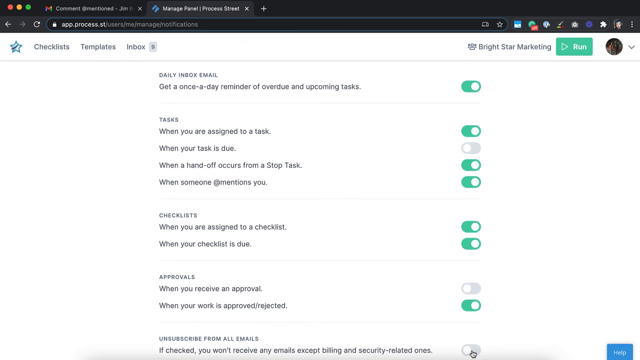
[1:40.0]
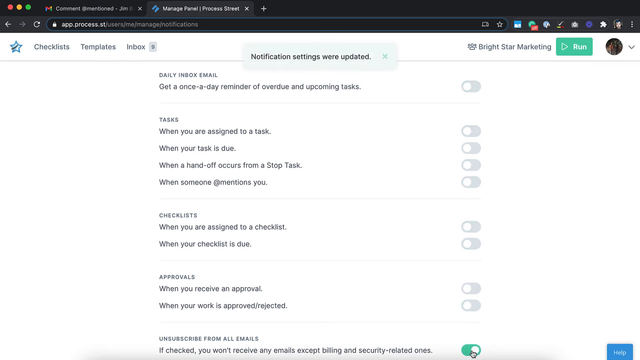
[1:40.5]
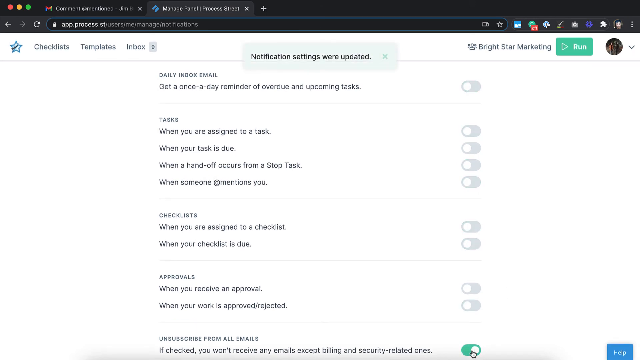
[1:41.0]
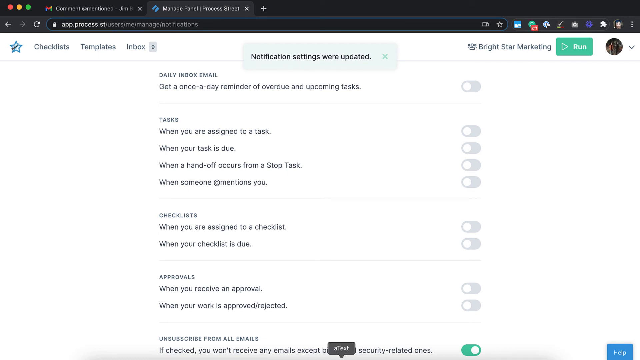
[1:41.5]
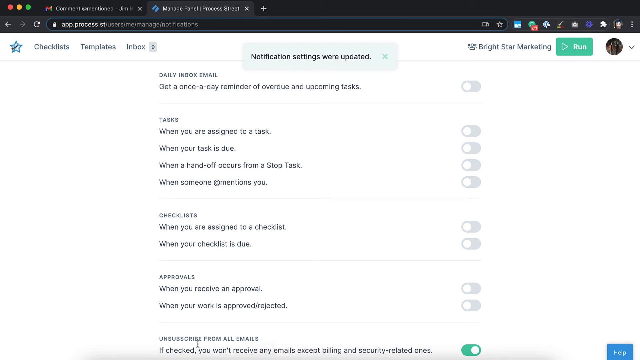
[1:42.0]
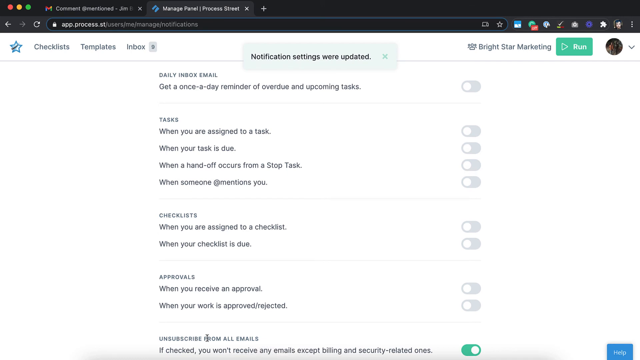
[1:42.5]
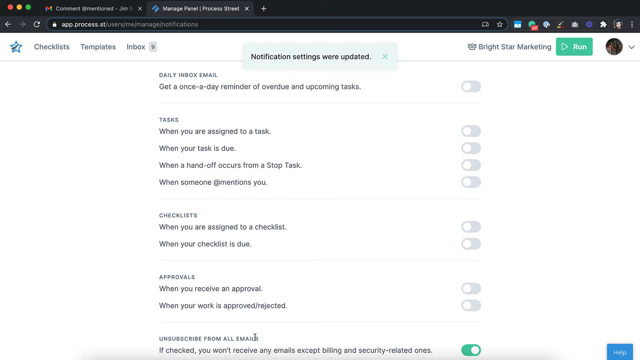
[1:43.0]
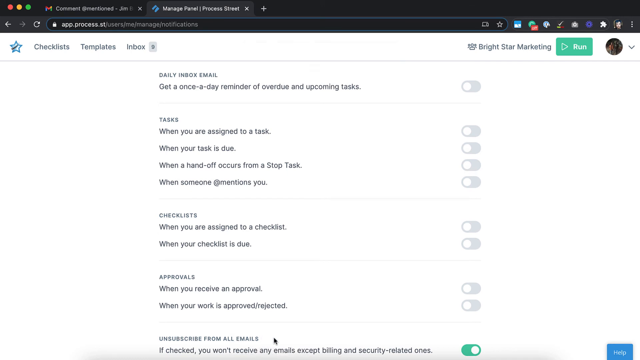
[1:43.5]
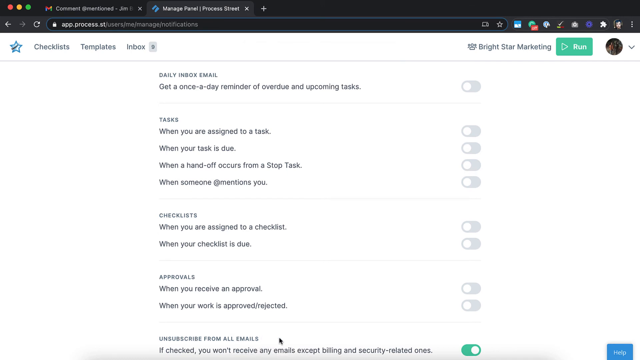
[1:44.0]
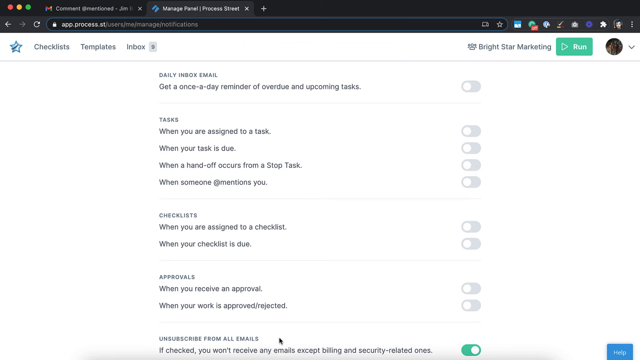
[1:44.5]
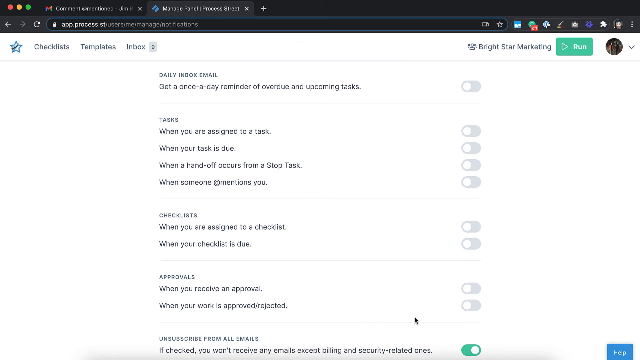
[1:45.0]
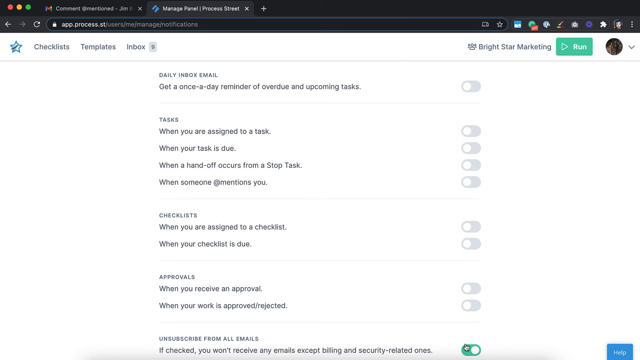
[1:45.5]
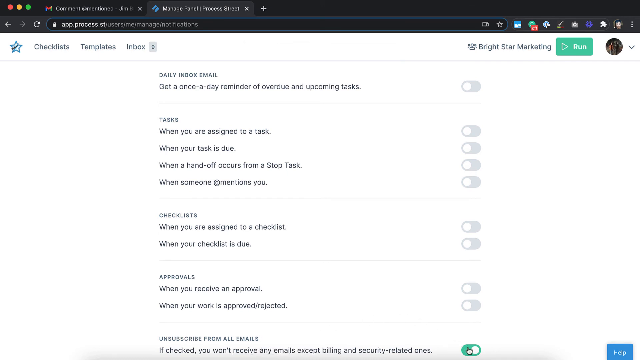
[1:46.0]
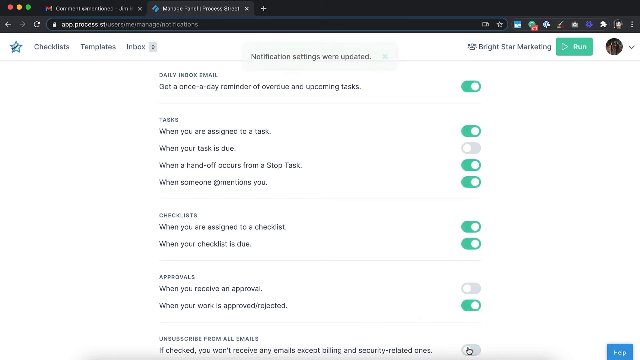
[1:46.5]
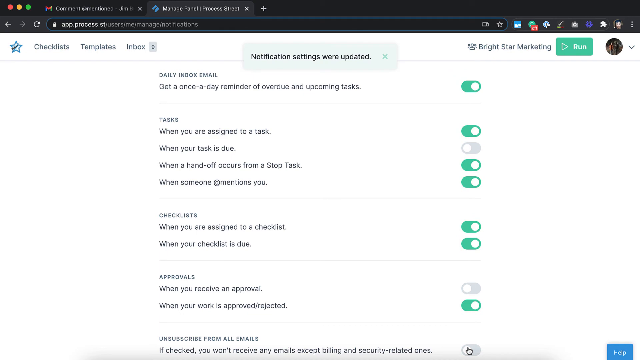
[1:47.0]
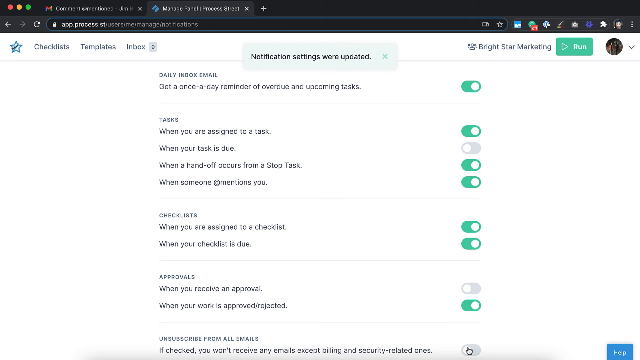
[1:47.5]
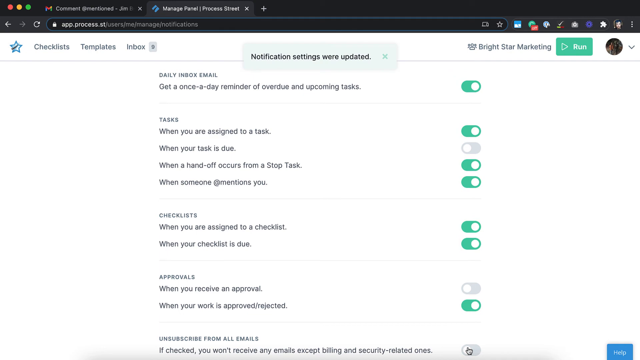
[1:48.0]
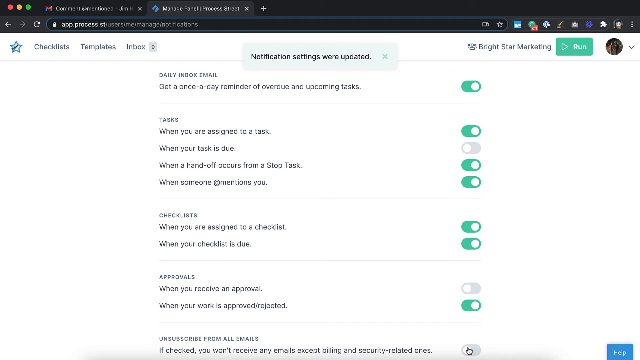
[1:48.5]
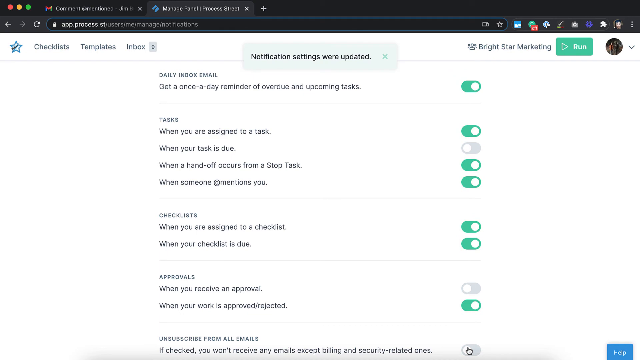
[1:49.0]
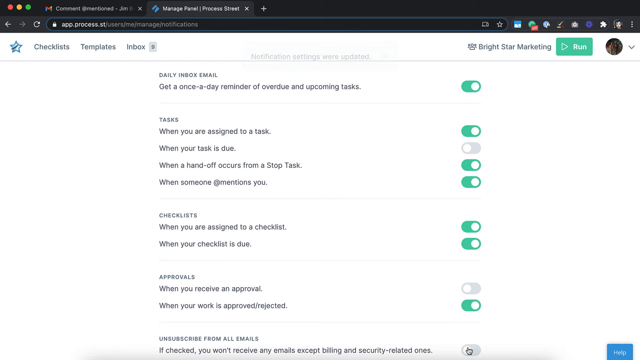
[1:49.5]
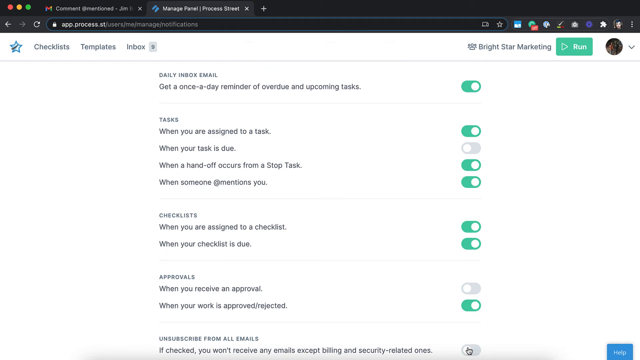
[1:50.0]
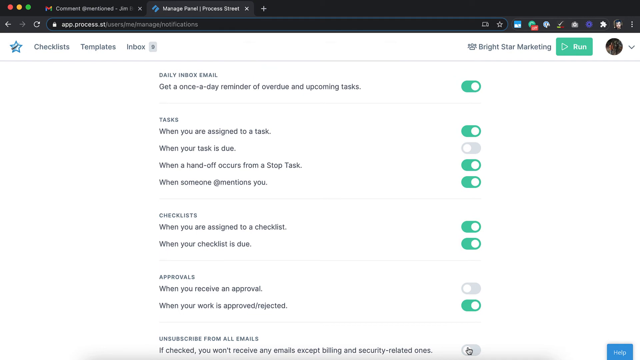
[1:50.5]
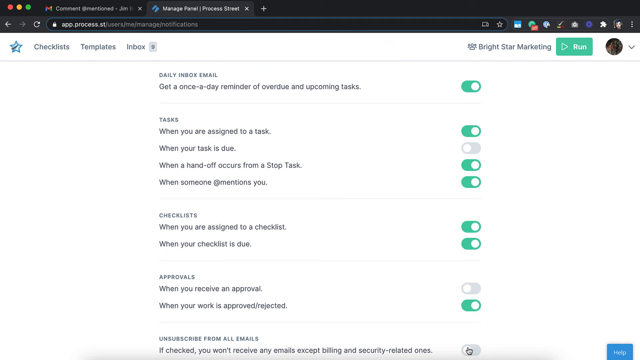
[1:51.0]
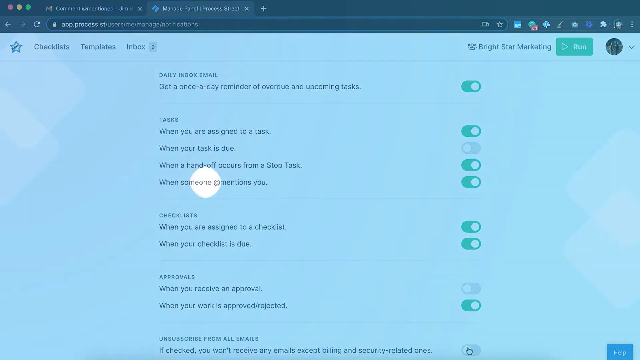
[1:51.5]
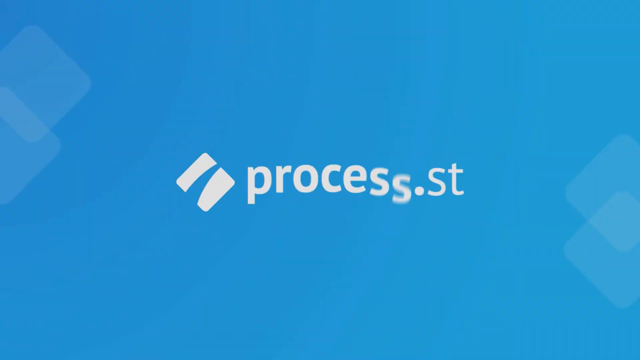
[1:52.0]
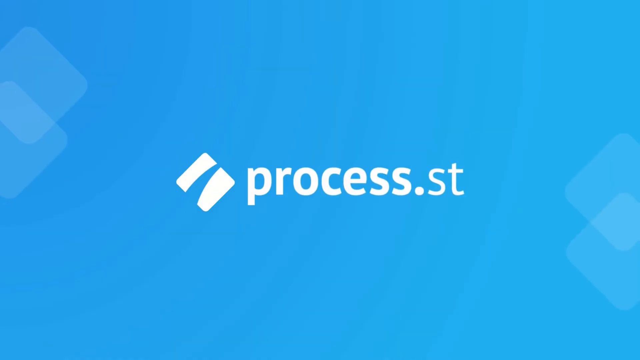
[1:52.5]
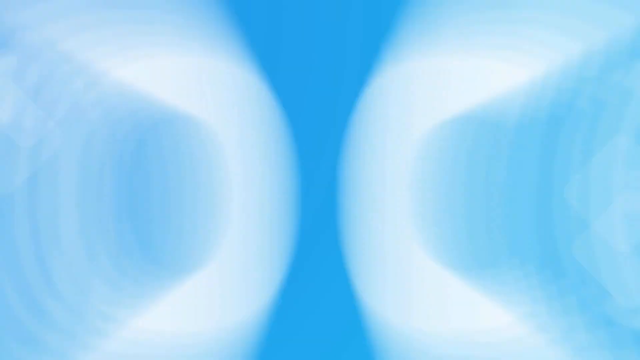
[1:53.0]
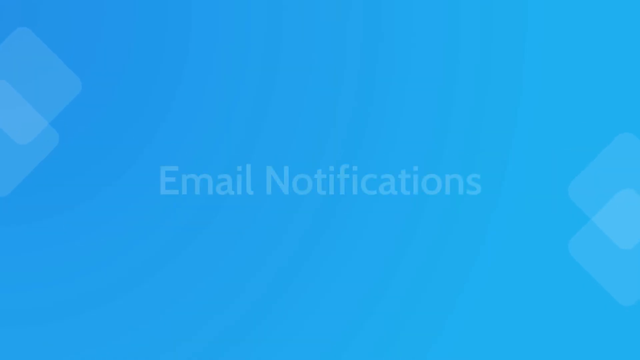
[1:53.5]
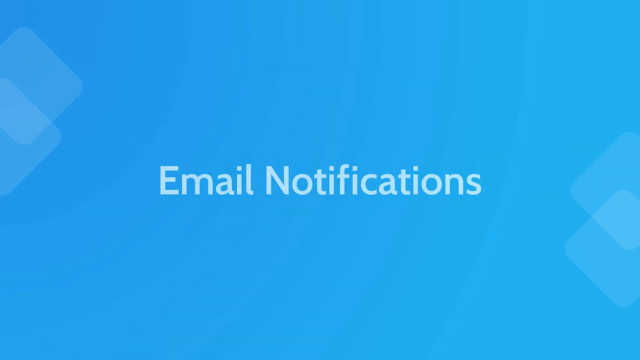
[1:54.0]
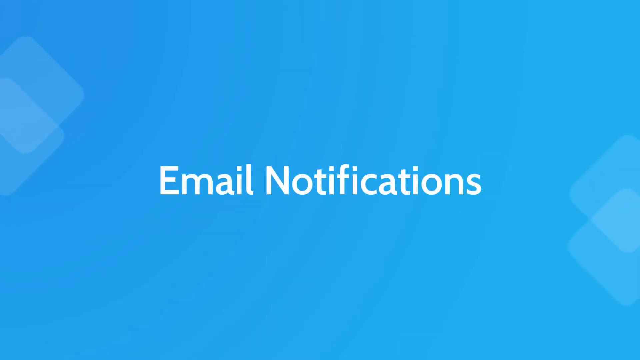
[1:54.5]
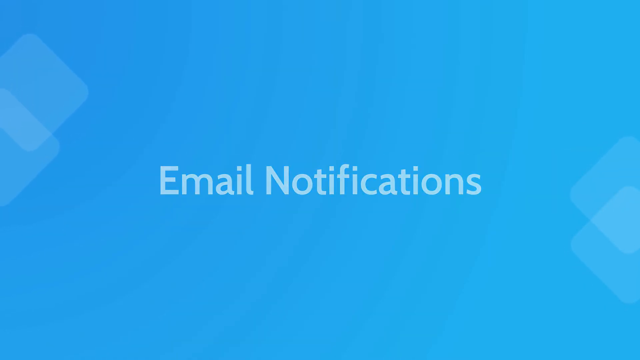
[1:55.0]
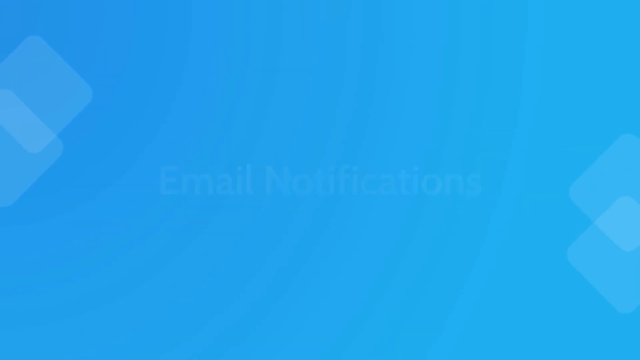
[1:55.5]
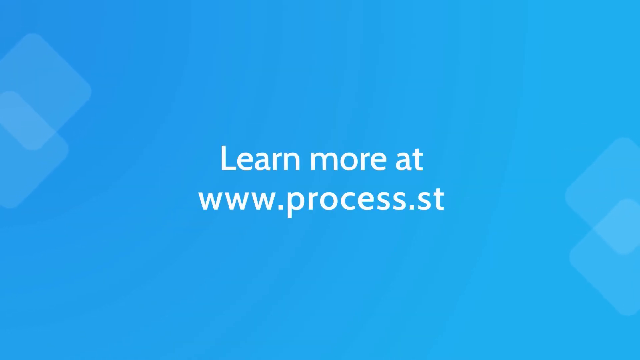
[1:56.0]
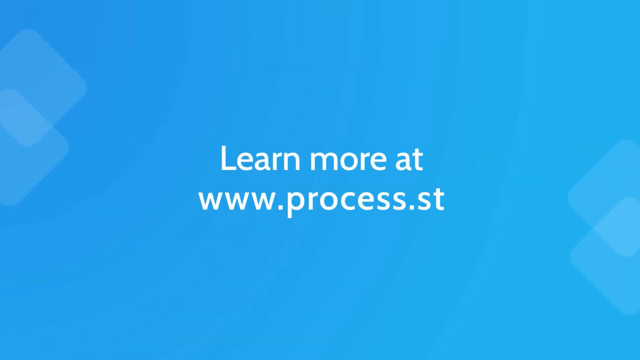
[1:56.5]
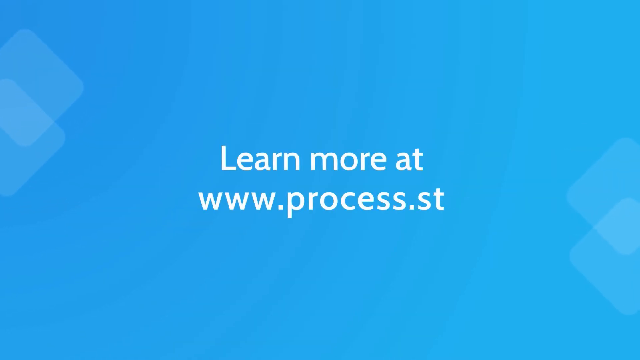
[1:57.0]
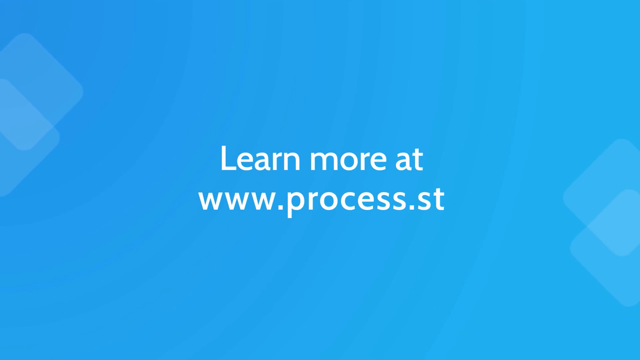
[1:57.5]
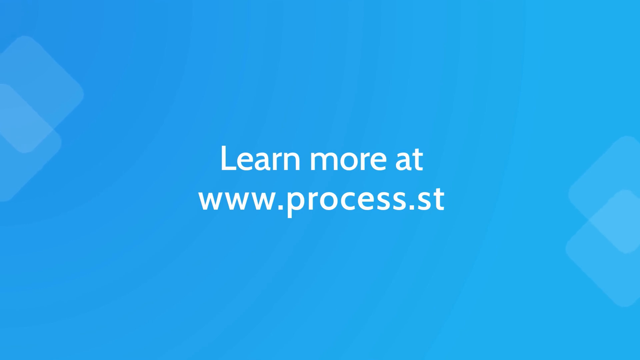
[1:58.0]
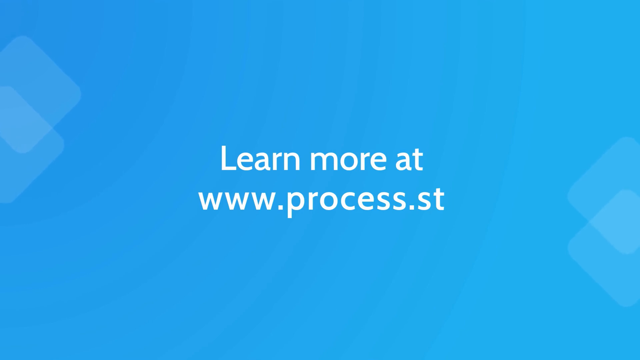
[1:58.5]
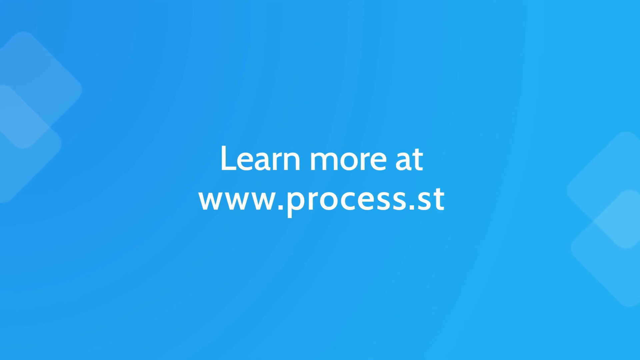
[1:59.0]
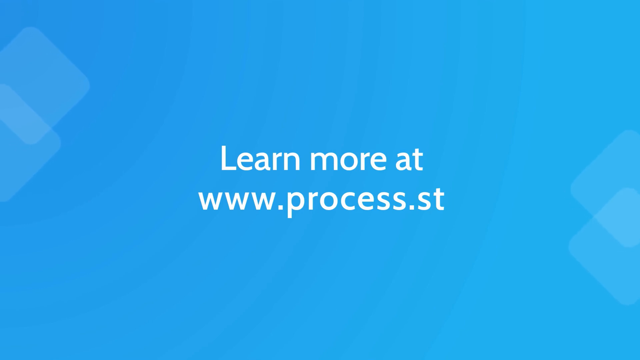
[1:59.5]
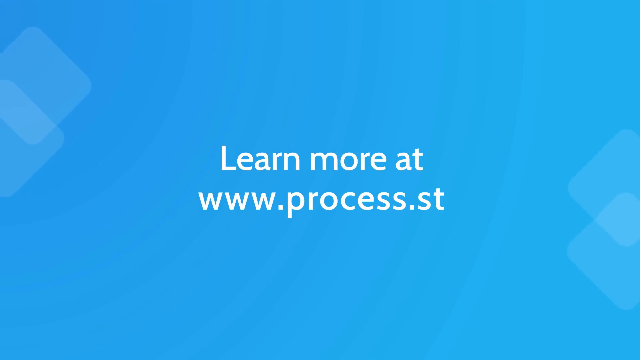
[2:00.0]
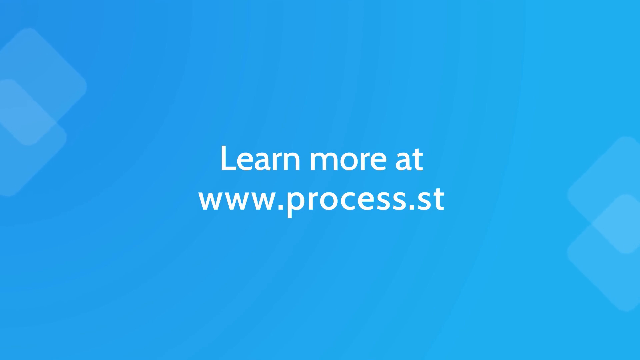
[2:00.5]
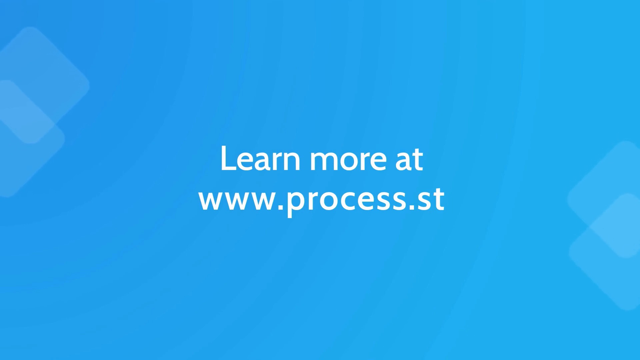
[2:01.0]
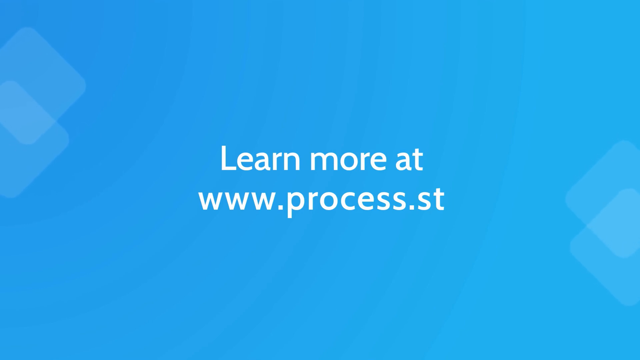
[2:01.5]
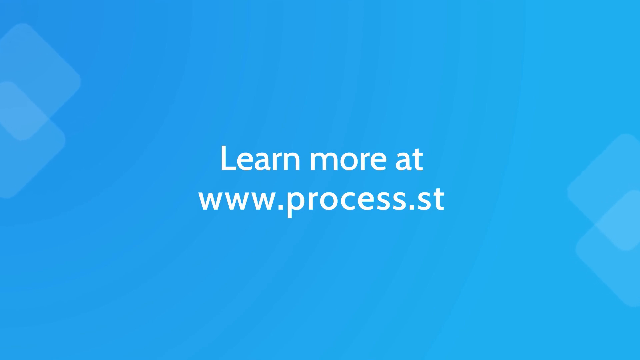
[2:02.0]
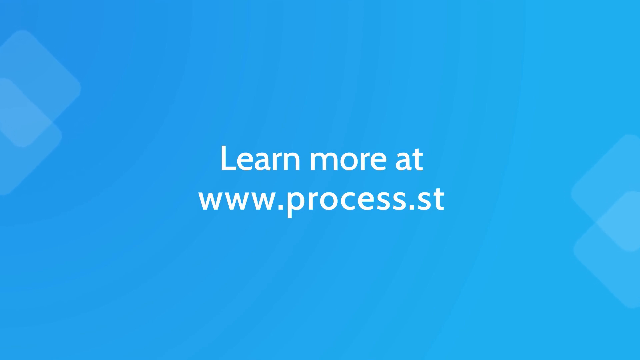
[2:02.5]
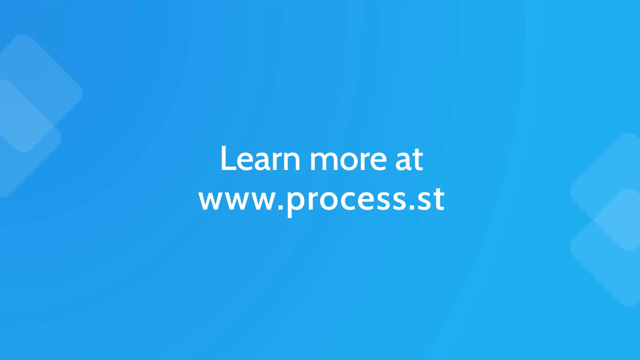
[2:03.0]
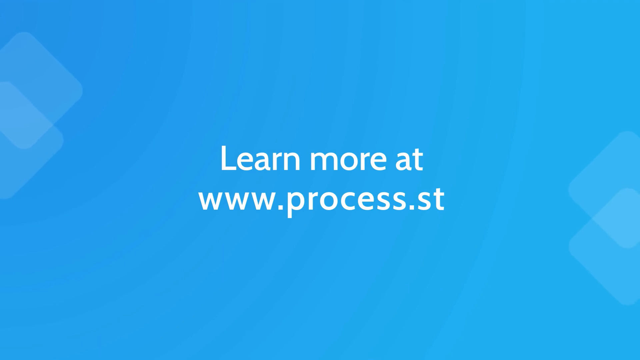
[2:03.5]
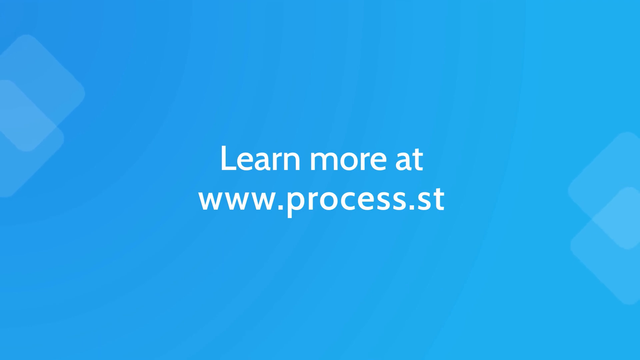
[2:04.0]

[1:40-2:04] The notification options of the task website are shown, with toggles on the right being toggled on and off. The person clicks the lowest button on the page, "unsubscribed from all emails". The text "email notifications" then appears on the screen, followed by a screen reading "learn more at www.process.st". This is a promotional video for this task list software.